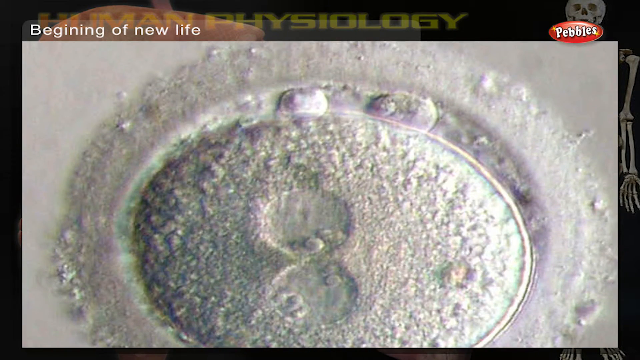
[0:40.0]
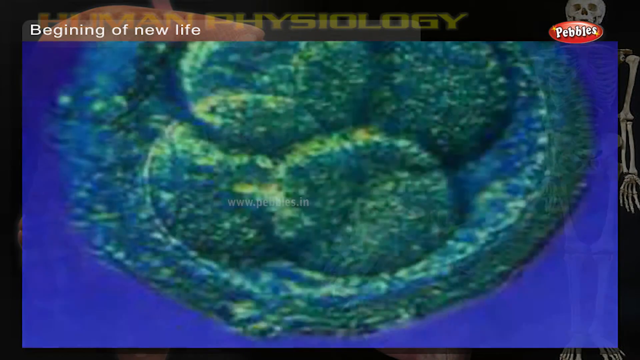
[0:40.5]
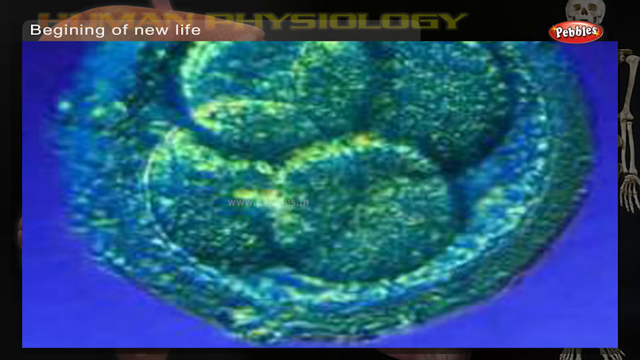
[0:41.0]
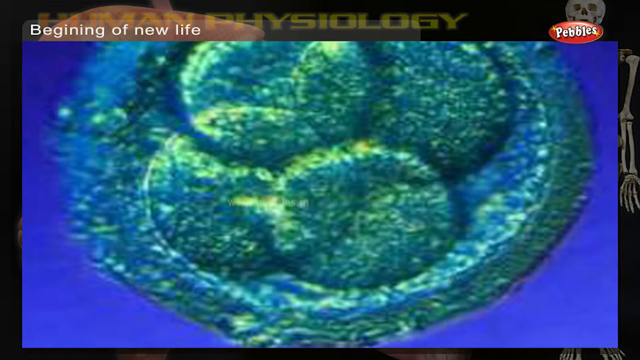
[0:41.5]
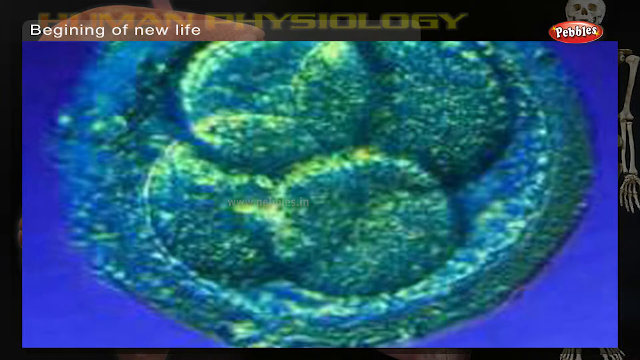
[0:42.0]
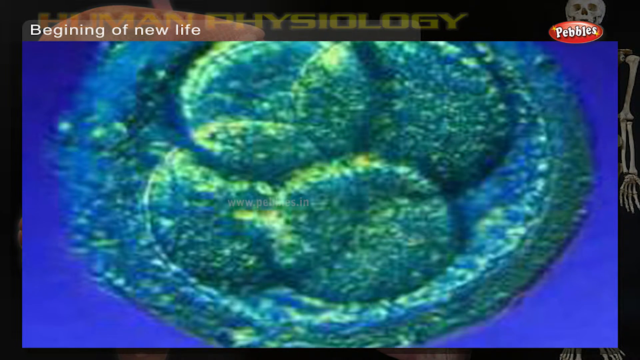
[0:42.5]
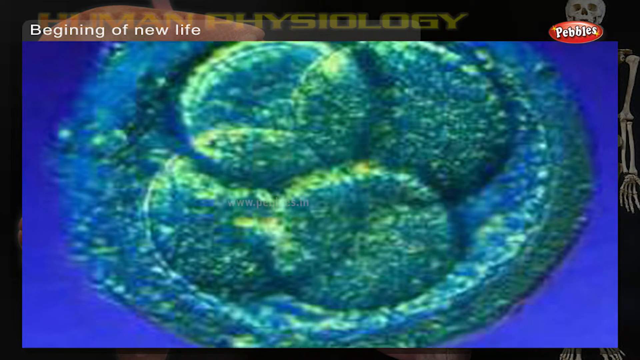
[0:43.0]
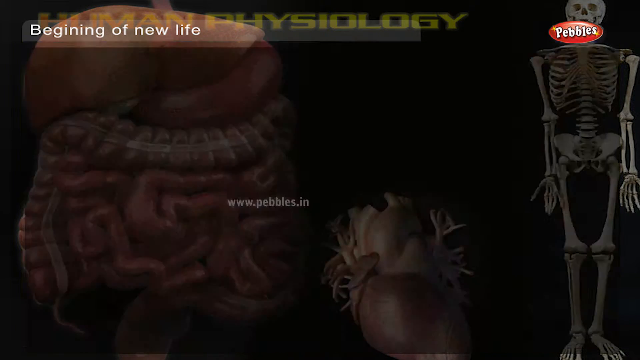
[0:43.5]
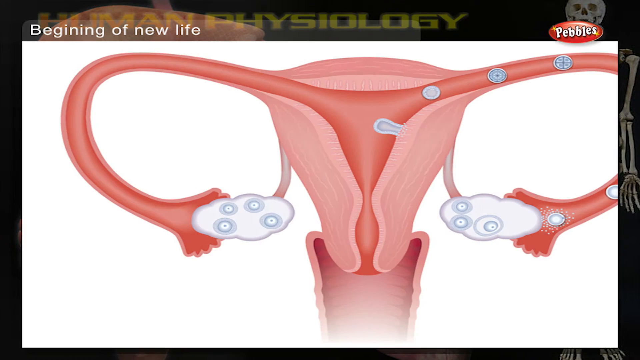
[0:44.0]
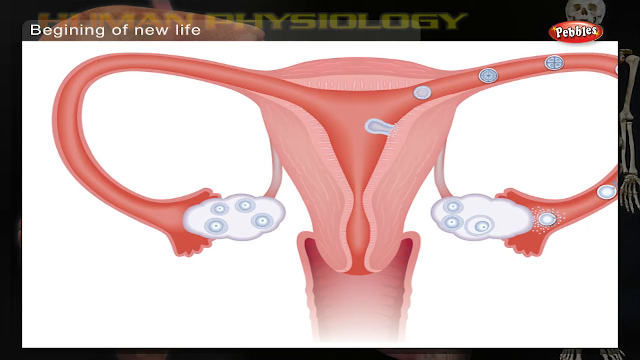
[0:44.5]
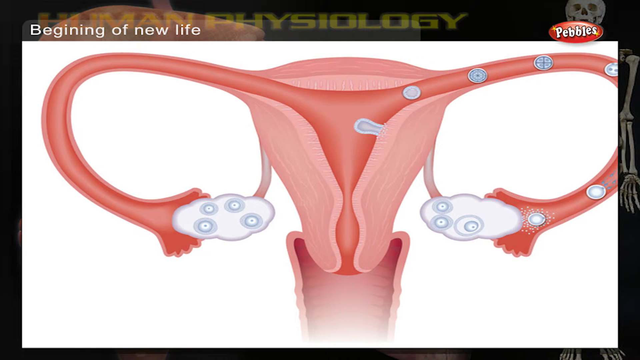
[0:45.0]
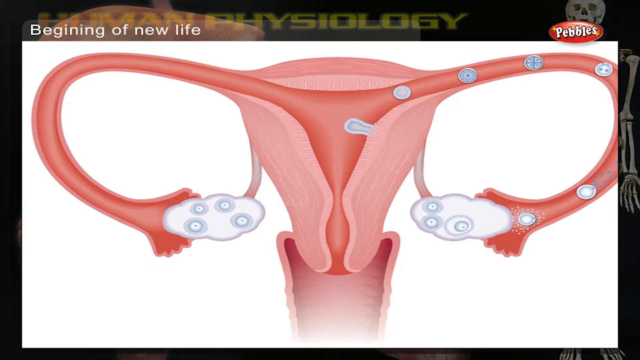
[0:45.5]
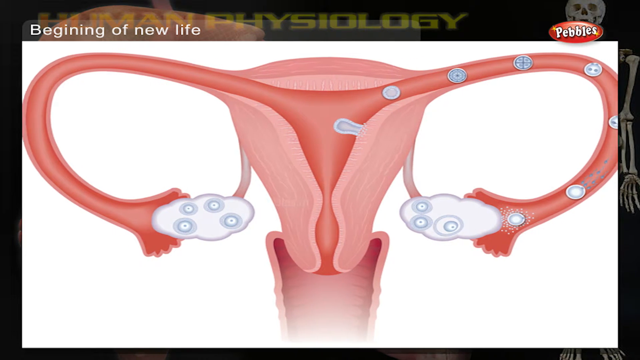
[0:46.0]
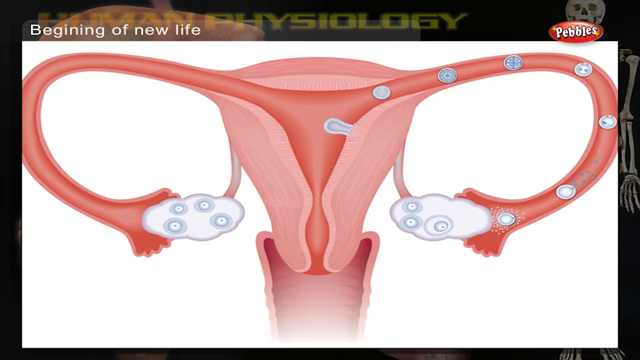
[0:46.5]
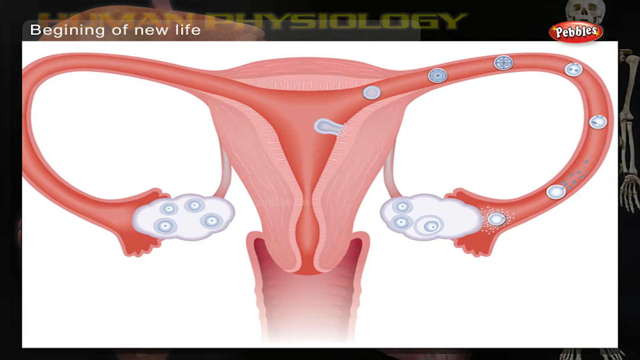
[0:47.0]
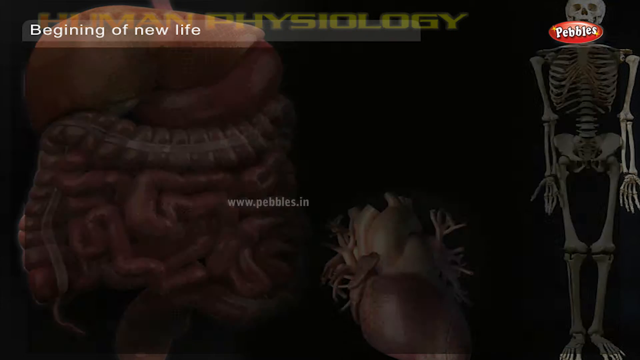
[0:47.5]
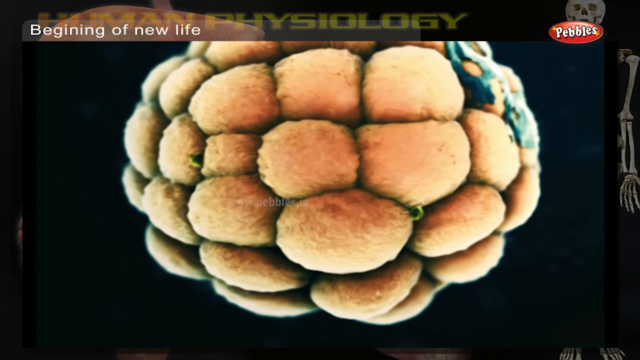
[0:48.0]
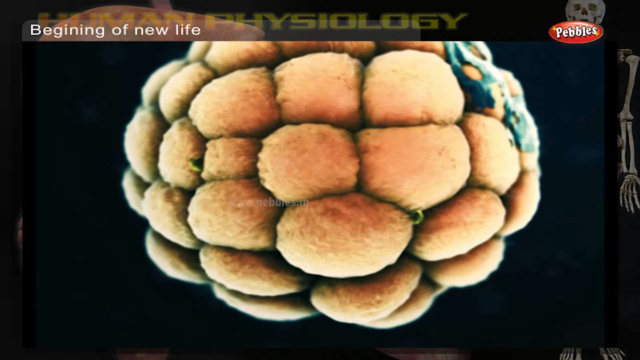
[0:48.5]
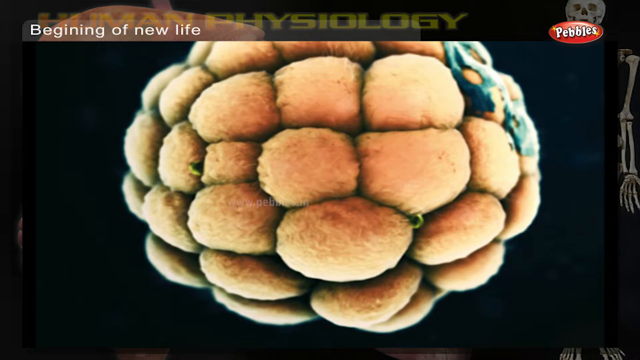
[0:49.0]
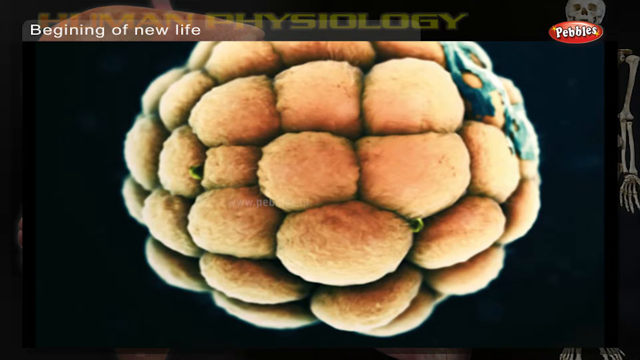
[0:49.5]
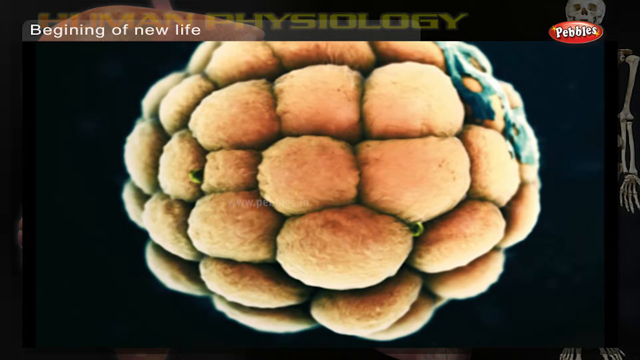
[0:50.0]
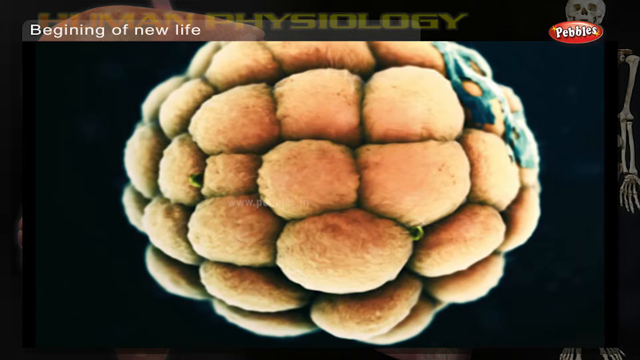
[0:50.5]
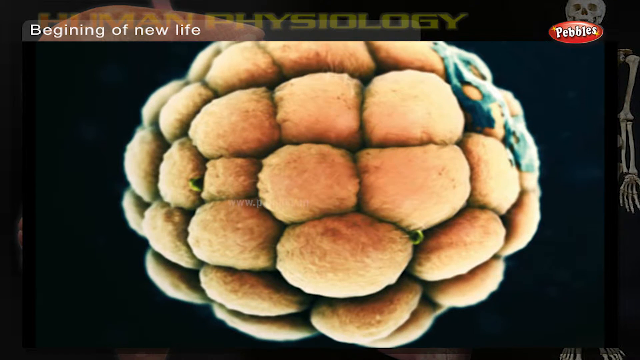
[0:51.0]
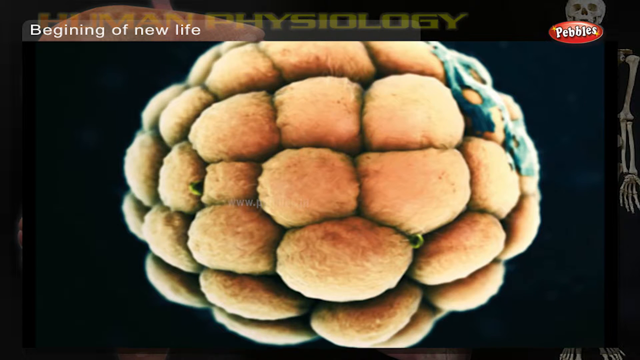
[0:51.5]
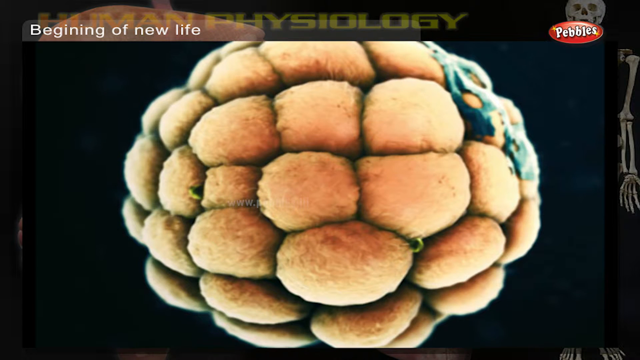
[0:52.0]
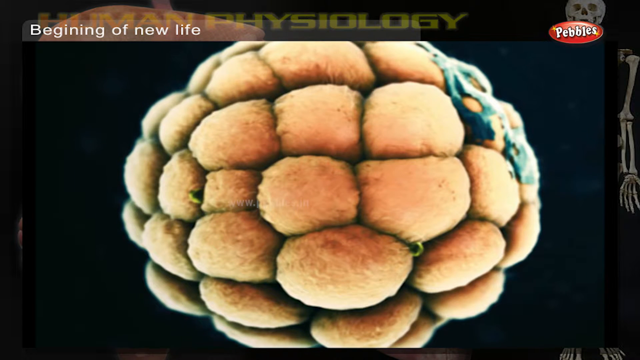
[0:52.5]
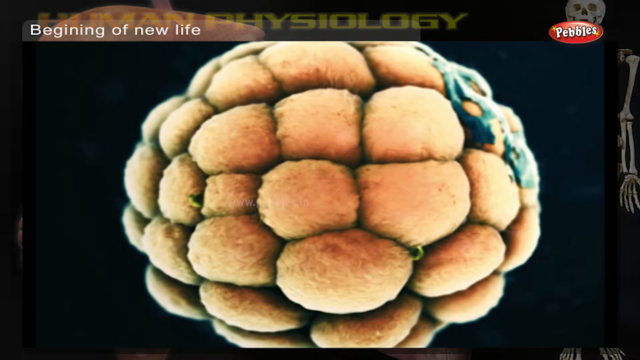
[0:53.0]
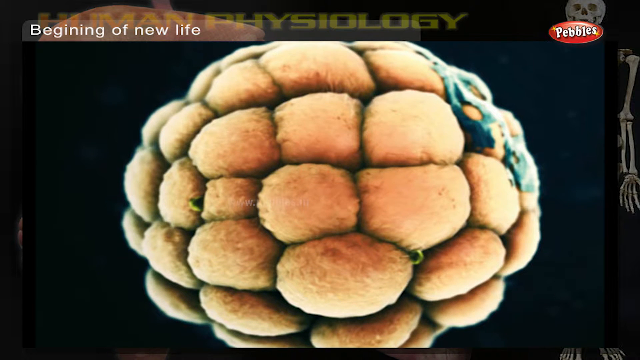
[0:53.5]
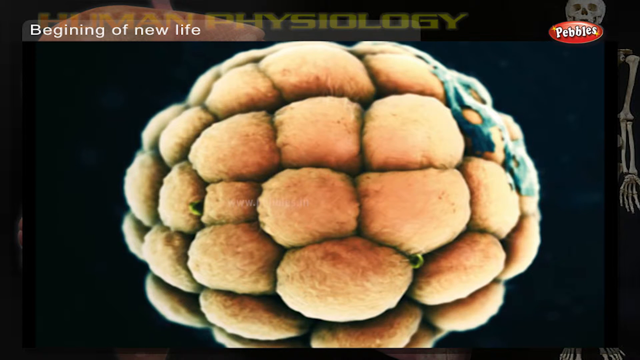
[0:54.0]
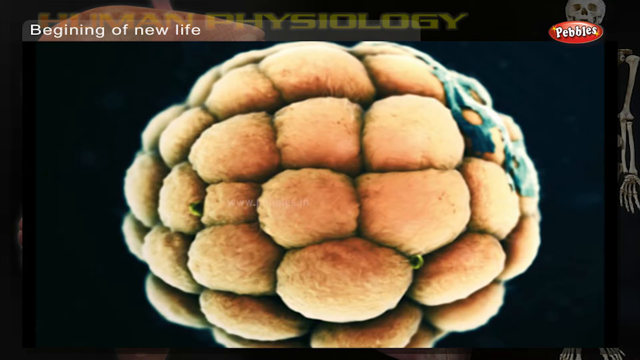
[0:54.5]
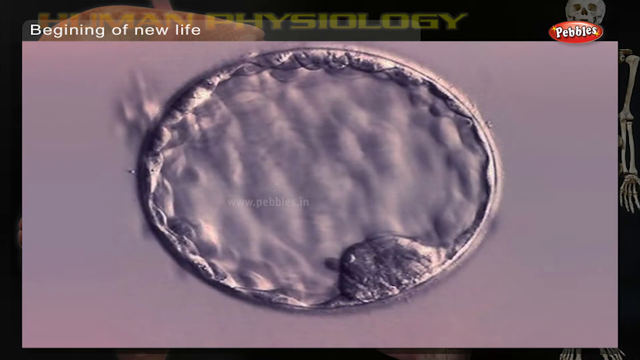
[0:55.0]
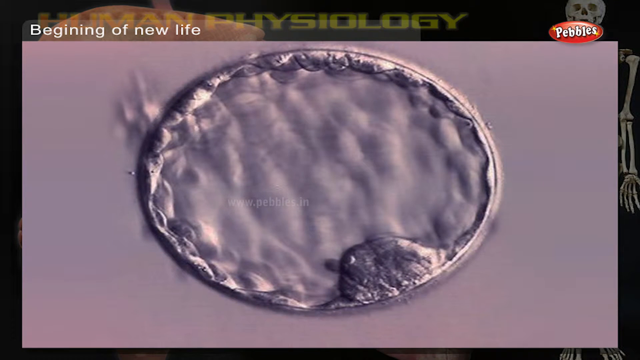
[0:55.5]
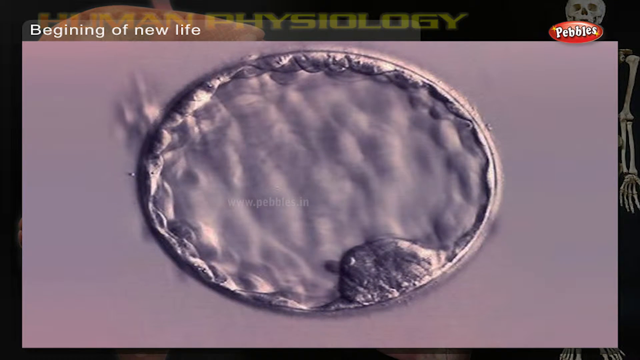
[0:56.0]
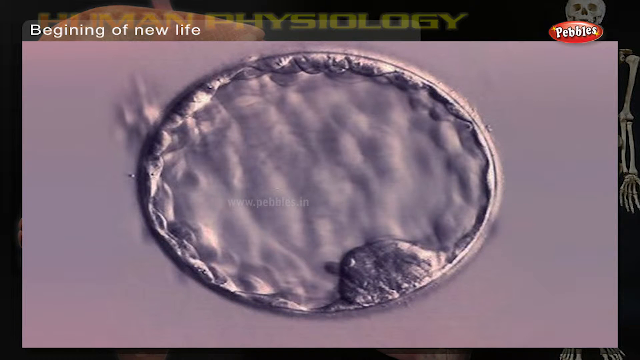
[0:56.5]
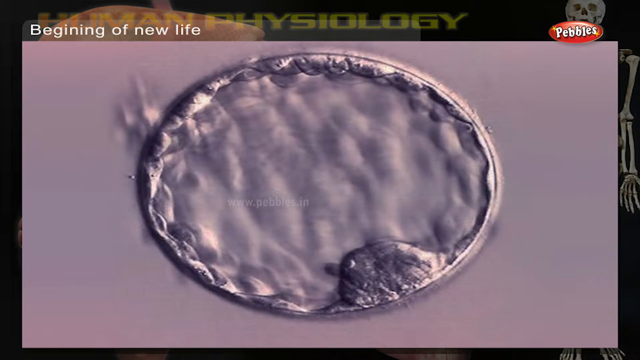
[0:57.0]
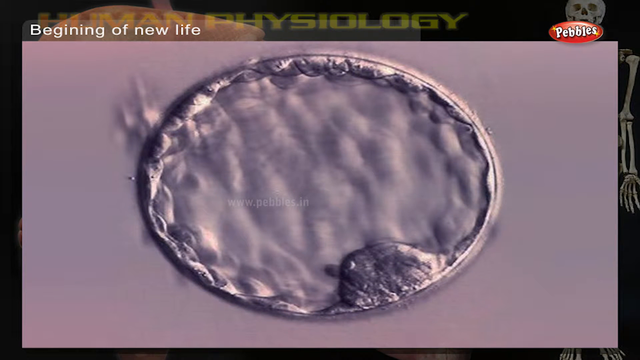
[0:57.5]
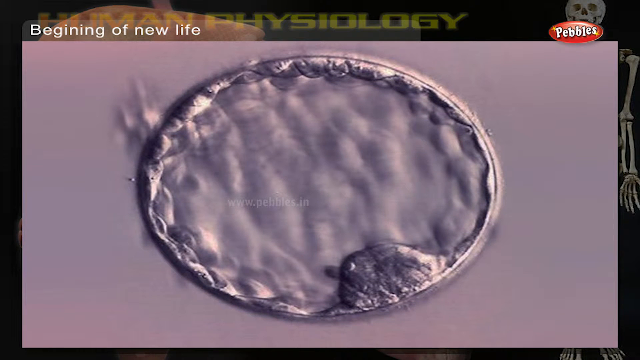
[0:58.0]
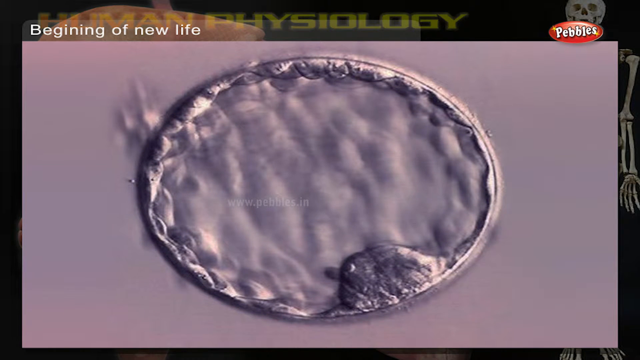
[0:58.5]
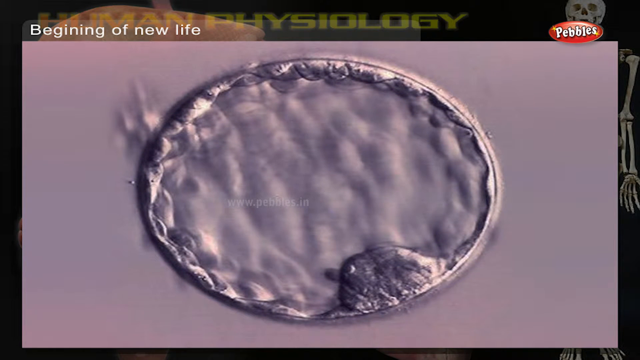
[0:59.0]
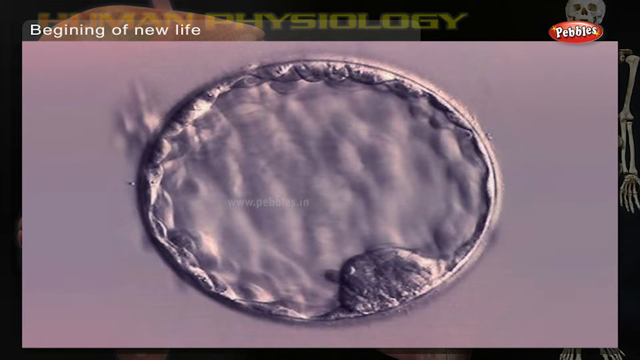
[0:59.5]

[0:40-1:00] The white substance is shown, then the video cuts to what seems to be the same picture in green and blue coloring, looking somewhat like a molecular view of something. The pictures change fairly quickly. A diagram of a cervix or pelvis shows little white circles going through the tubes. It cuts to another ball-like item with little puffy areas around it, looking like a fuzzy ball. The next picture is somewhat similar to the earlier white picture: a white circle, somewhat metallic in texture with a little bumpiness, unidentifiable and seemingly a molecular view of something.